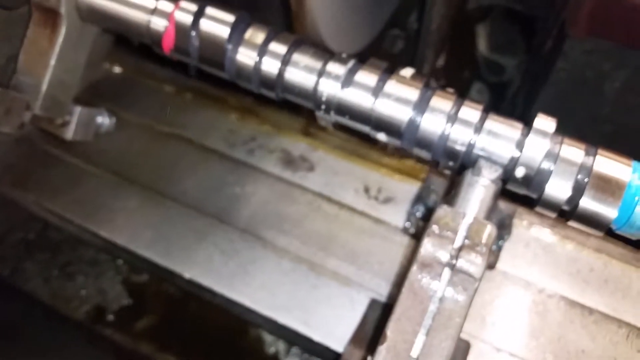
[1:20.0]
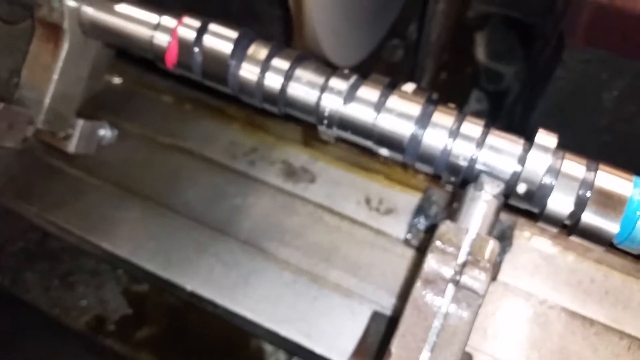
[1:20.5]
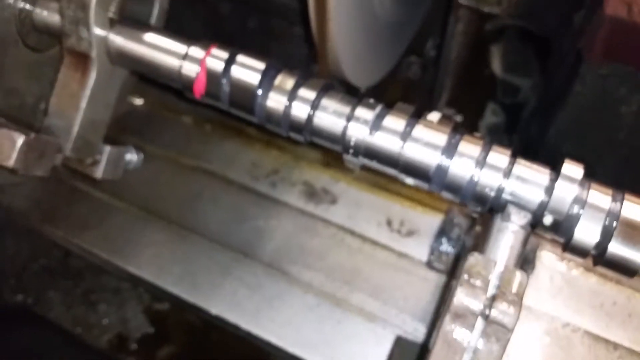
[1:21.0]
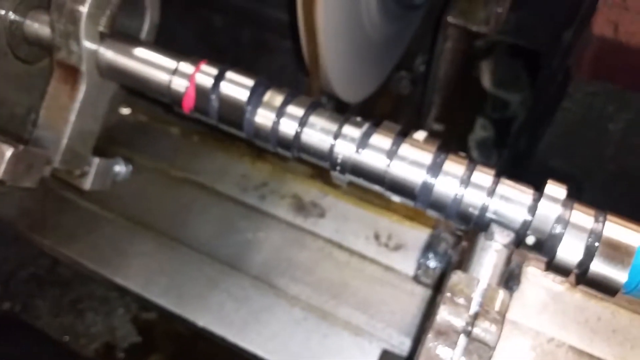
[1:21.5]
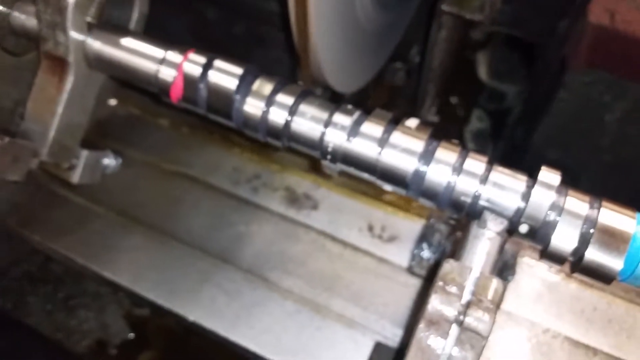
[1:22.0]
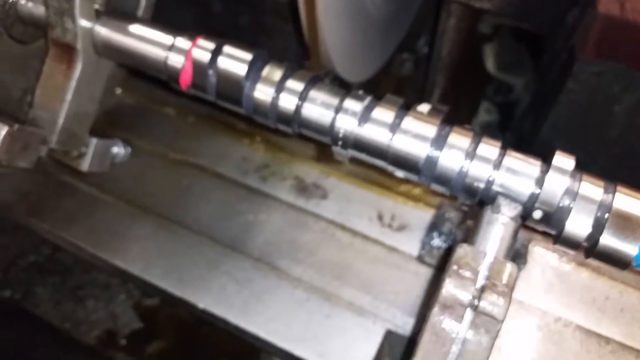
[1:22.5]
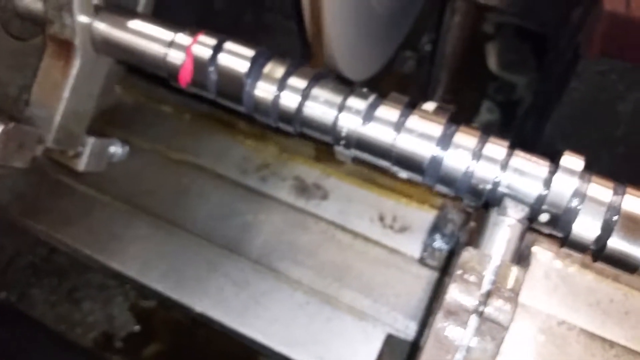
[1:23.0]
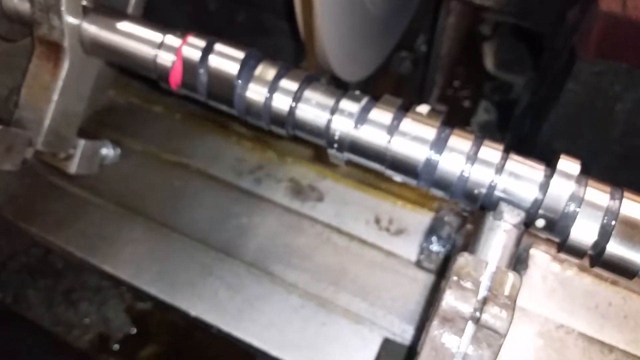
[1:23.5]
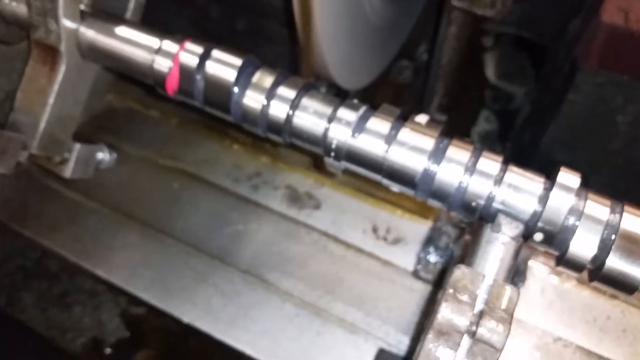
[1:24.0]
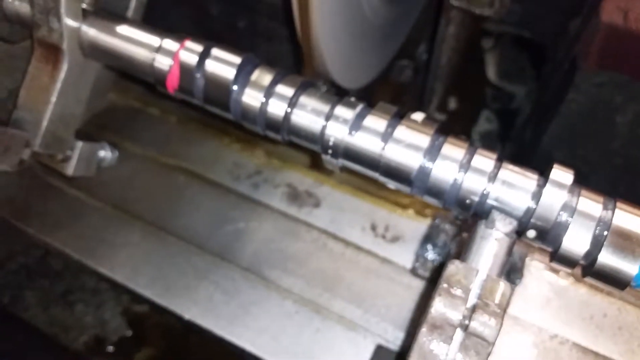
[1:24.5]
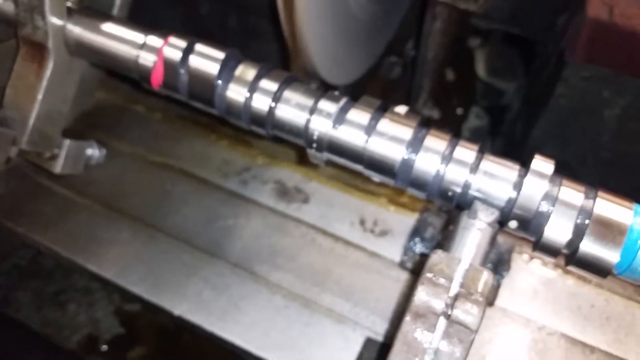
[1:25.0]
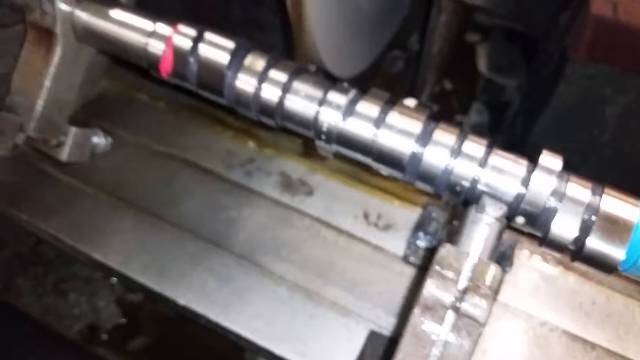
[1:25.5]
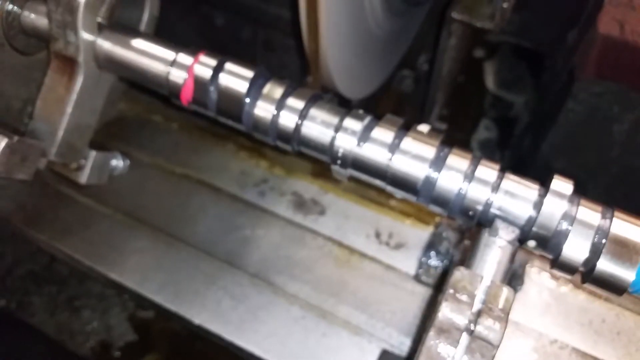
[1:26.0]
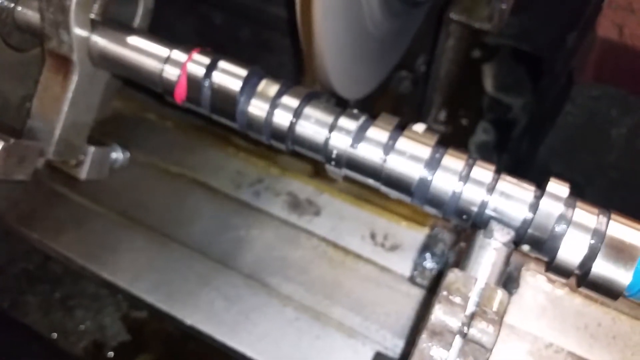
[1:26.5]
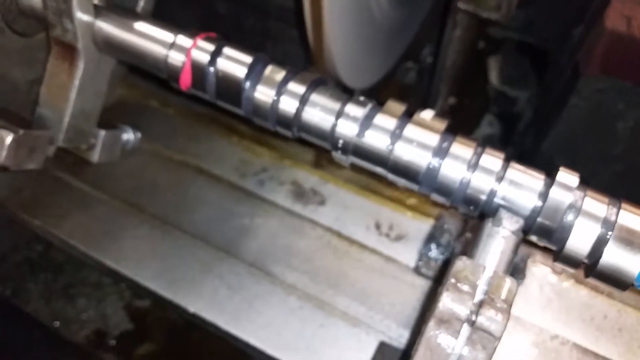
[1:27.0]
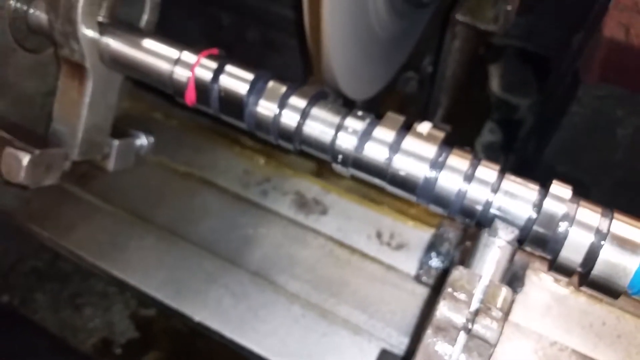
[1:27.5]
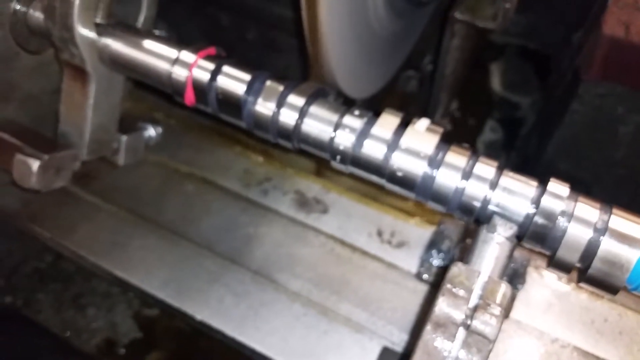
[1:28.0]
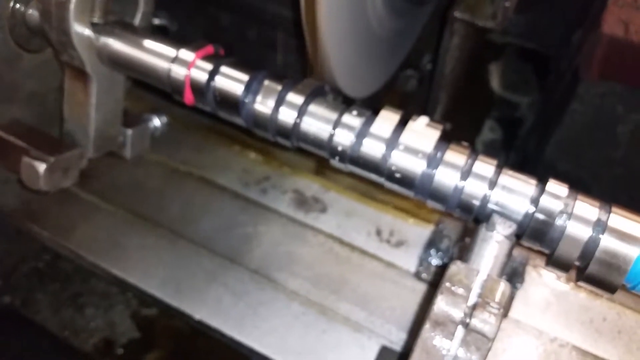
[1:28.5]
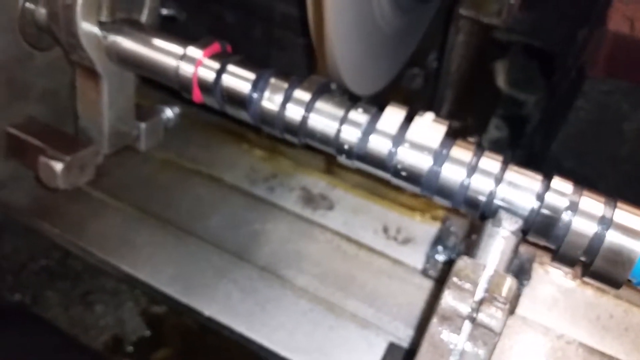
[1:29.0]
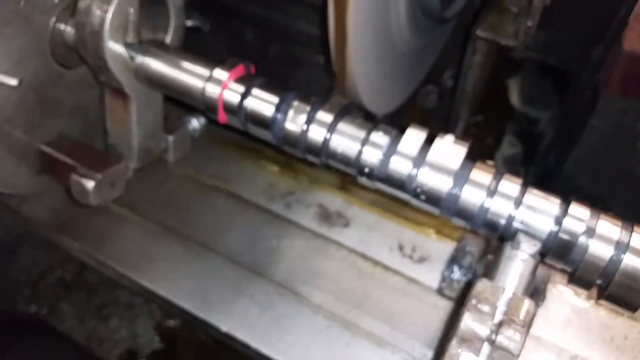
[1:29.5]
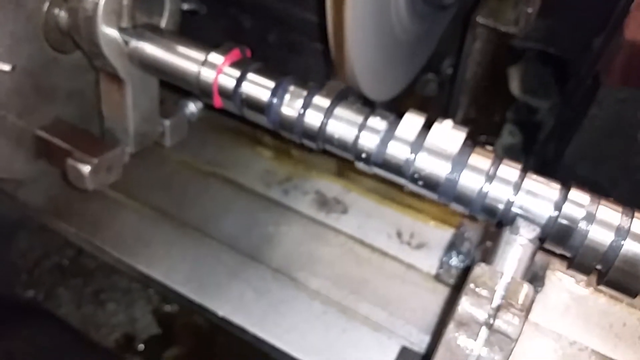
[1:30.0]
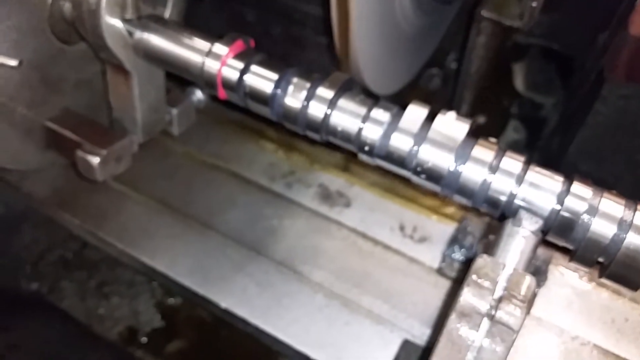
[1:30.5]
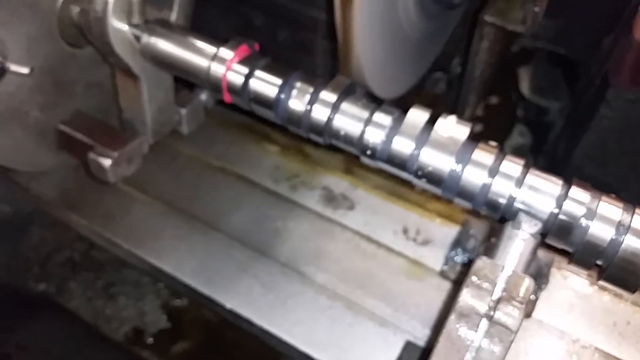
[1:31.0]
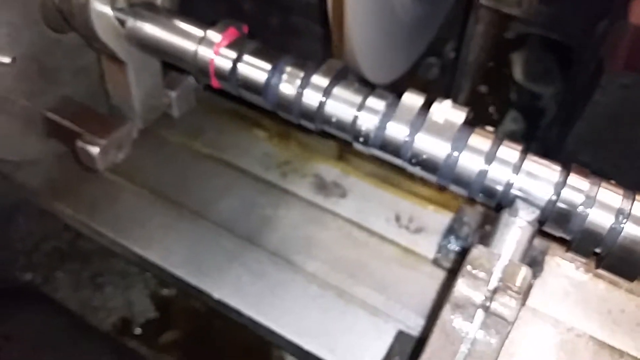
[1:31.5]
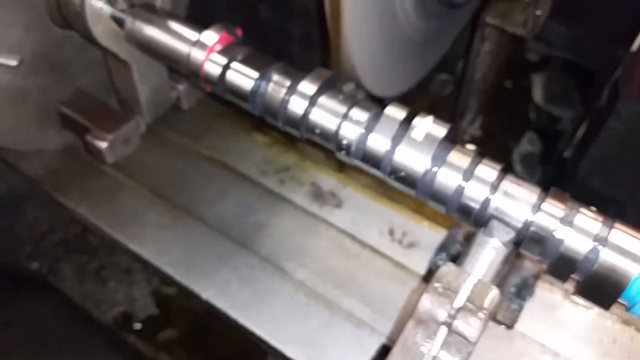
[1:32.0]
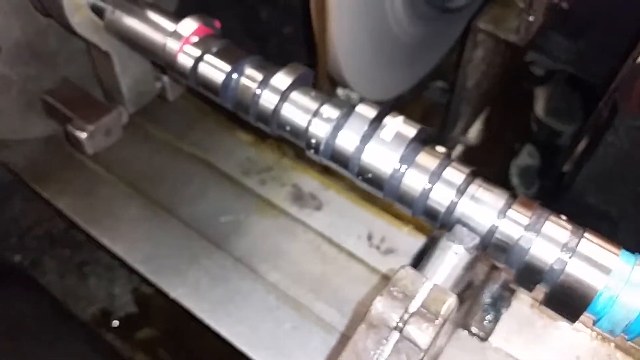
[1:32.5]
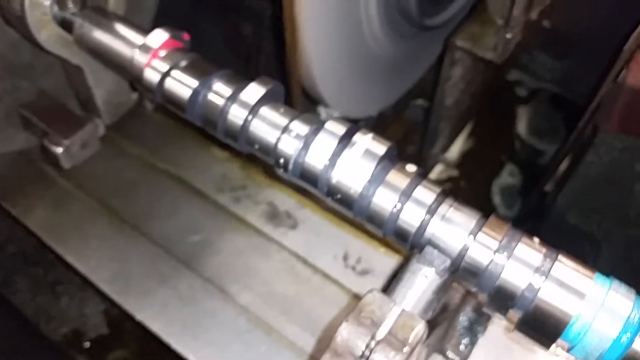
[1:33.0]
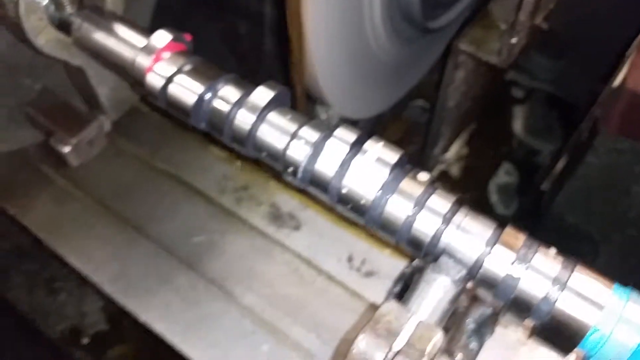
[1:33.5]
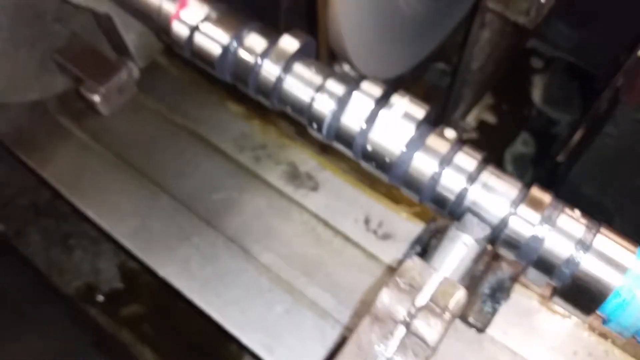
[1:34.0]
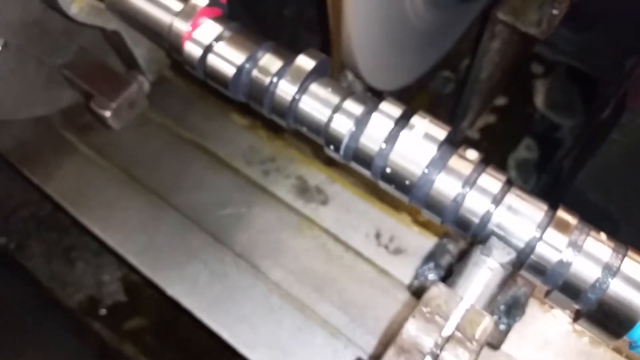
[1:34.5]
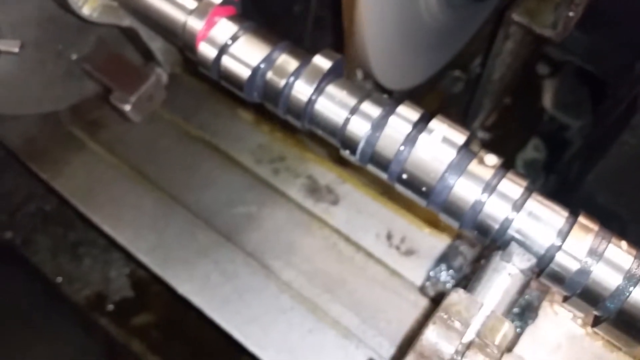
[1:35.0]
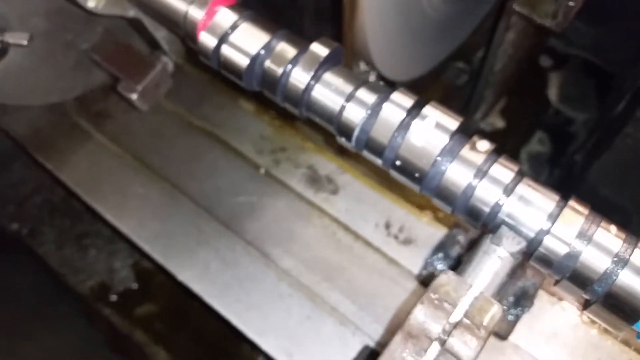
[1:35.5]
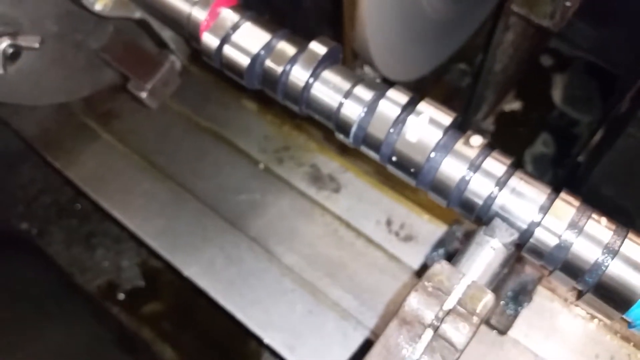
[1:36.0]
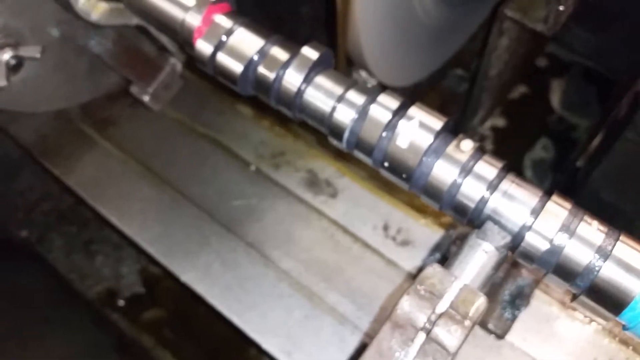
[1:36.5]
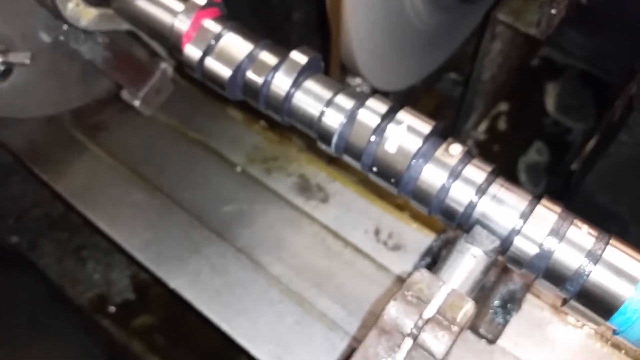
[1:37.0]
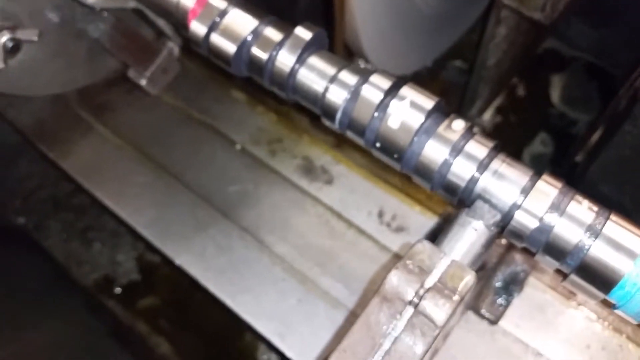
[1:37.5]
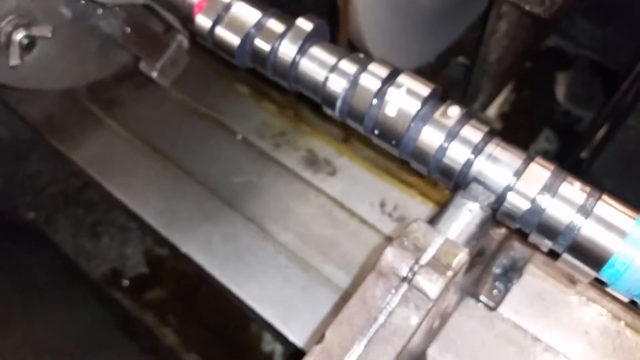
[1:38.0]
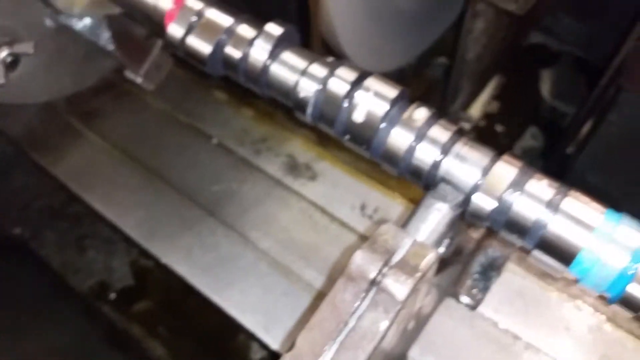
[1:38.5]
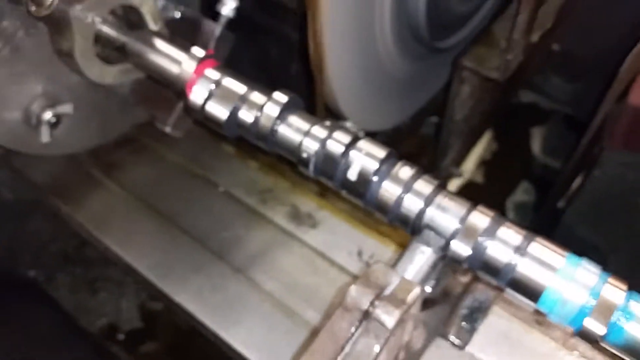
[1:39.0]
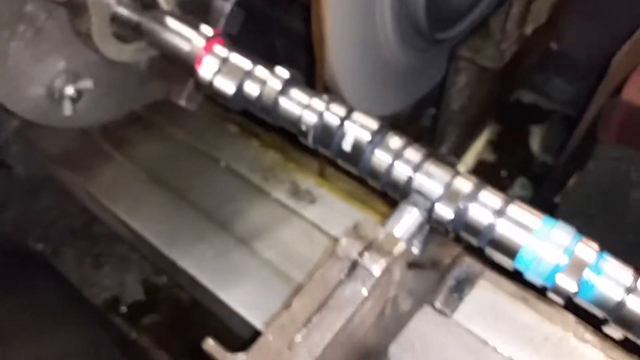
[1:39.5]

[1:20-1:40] A machine appears to be being cleaned and sharpened, with something, possibly dirt, being removed. It moves, and the movement down below is slow, as if something is stopping it; it is unclear whether the liquid or oil is causing this. The machine is very dirty, and the place looks dirty and unsafe.